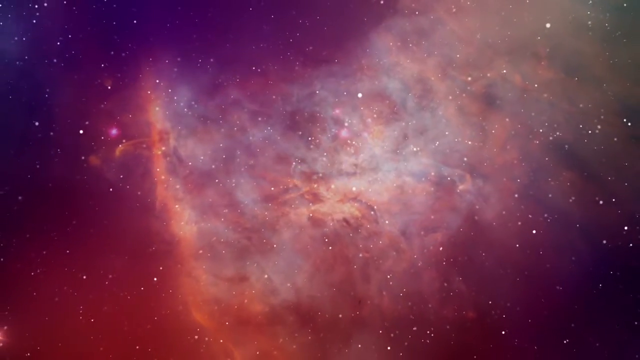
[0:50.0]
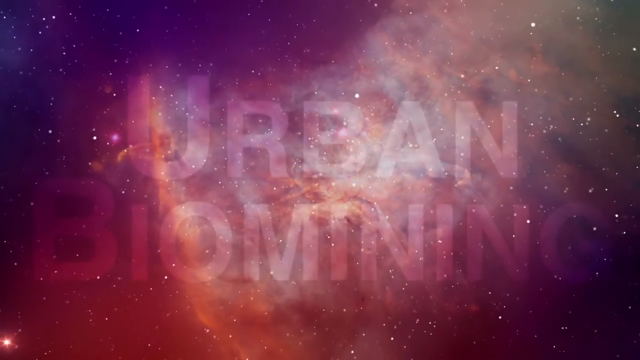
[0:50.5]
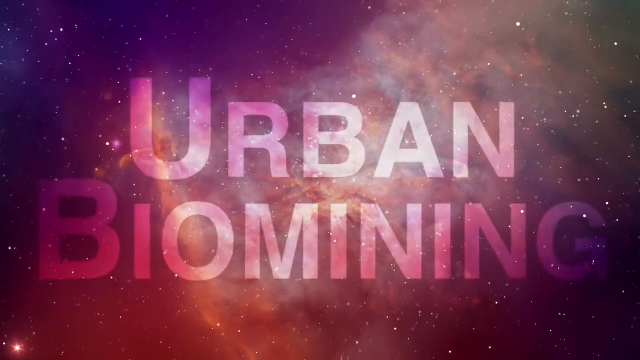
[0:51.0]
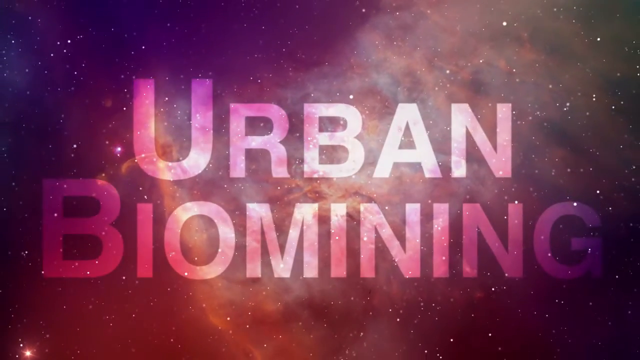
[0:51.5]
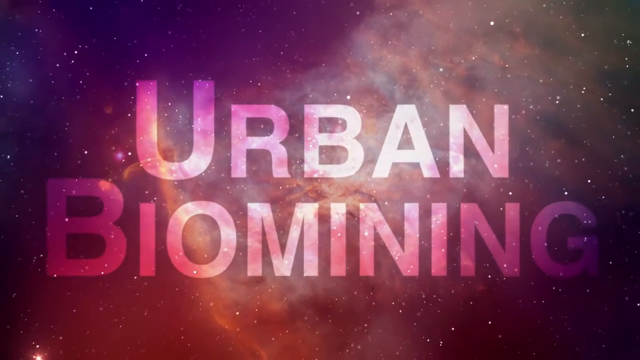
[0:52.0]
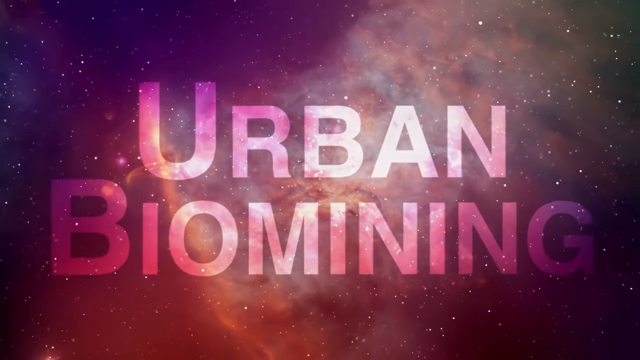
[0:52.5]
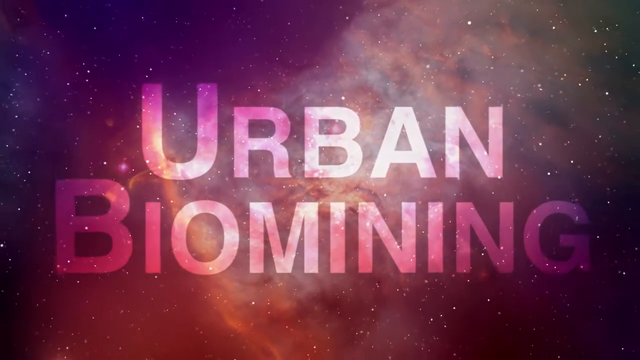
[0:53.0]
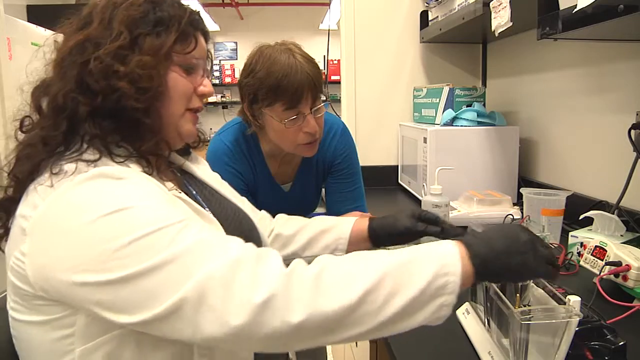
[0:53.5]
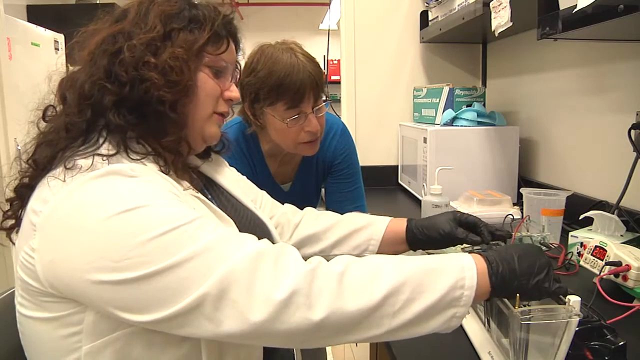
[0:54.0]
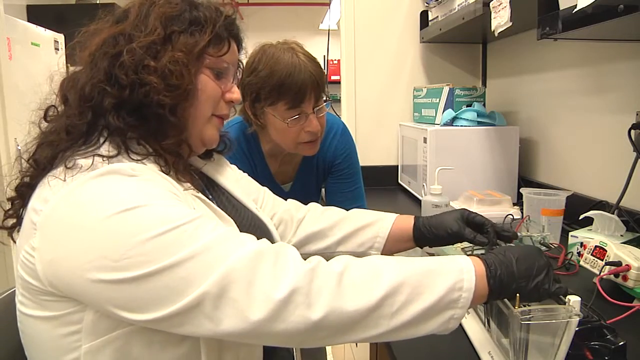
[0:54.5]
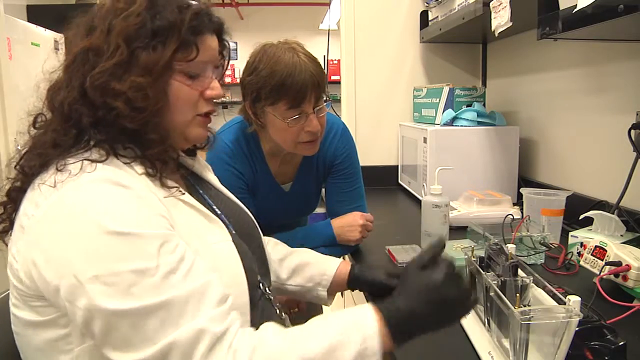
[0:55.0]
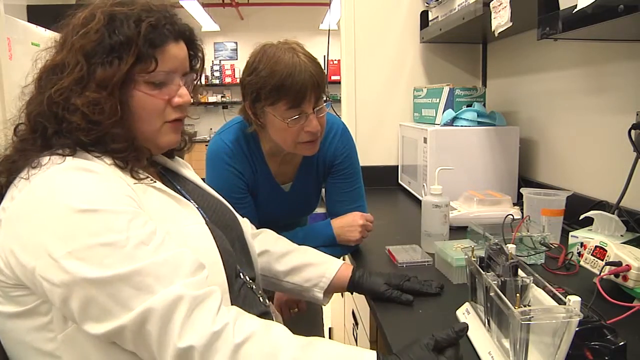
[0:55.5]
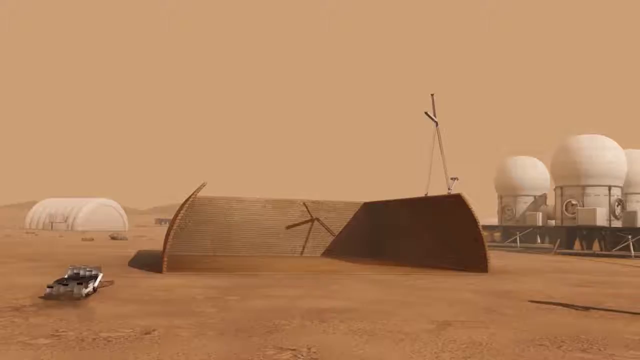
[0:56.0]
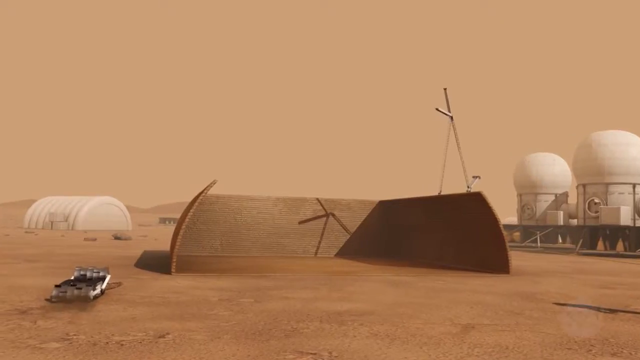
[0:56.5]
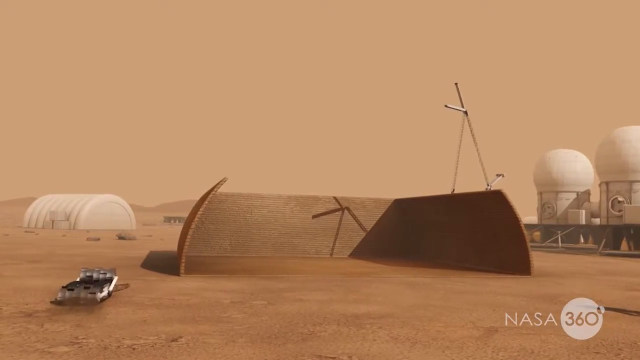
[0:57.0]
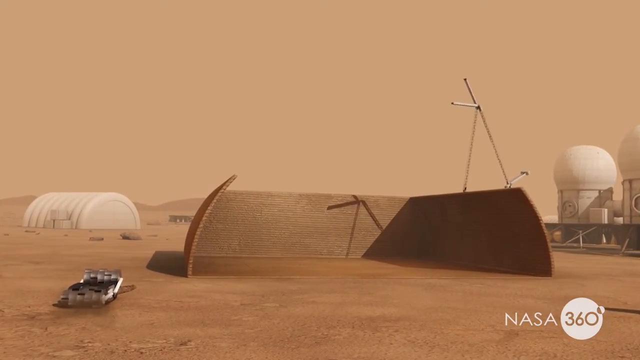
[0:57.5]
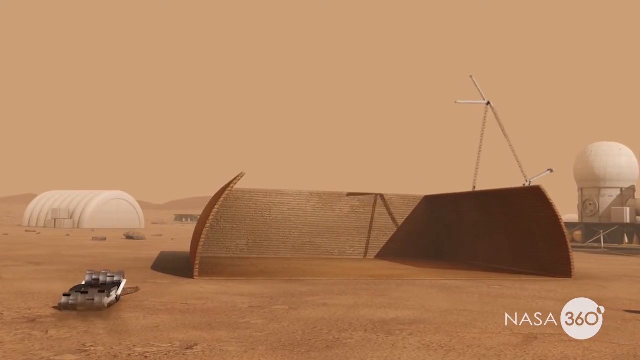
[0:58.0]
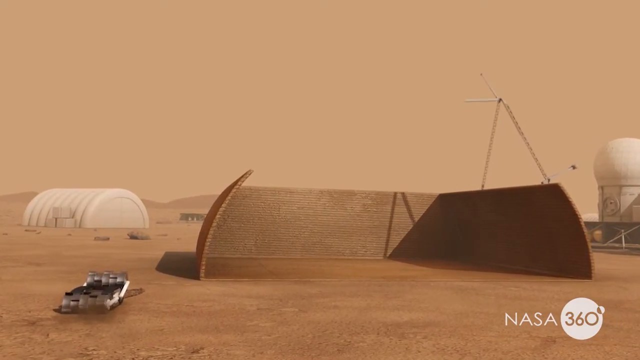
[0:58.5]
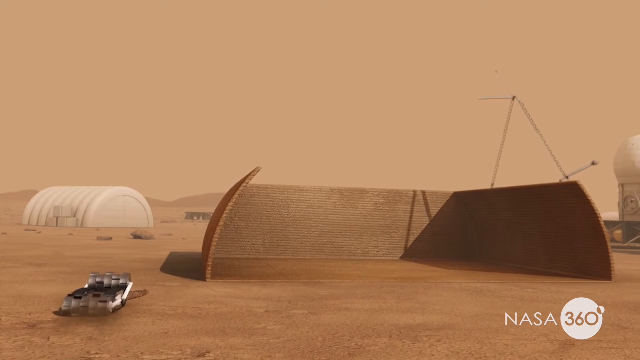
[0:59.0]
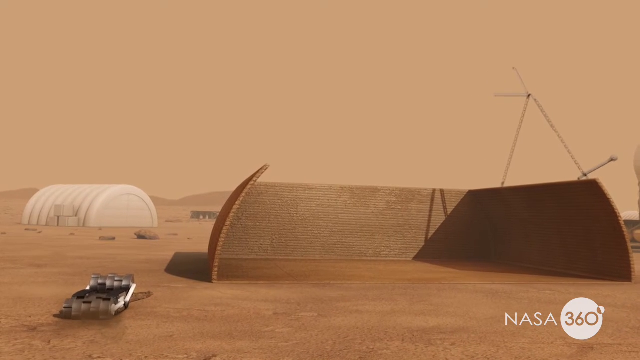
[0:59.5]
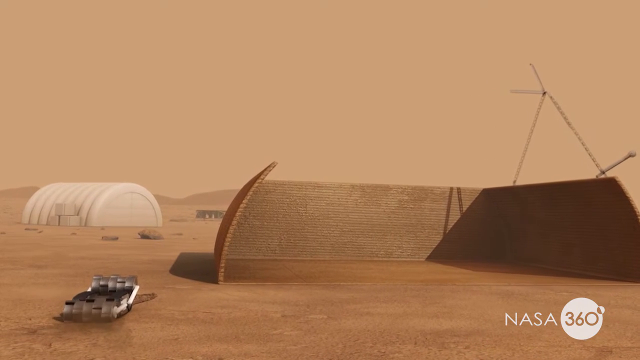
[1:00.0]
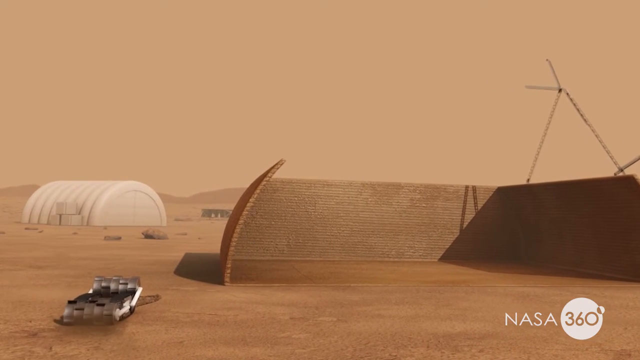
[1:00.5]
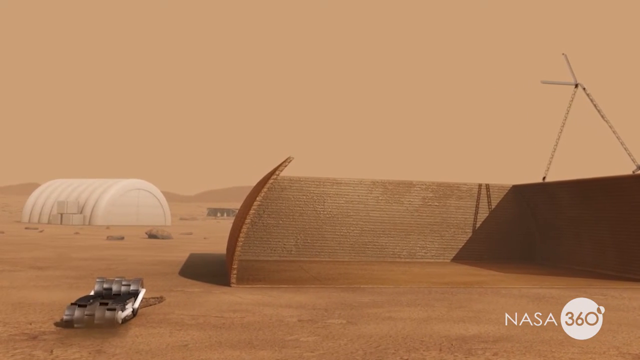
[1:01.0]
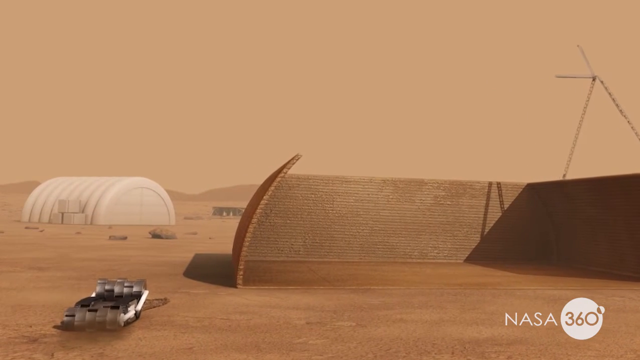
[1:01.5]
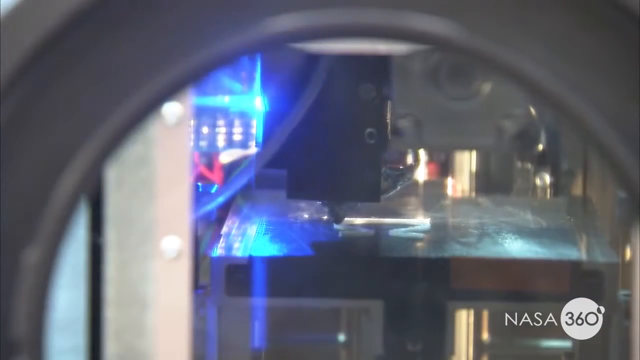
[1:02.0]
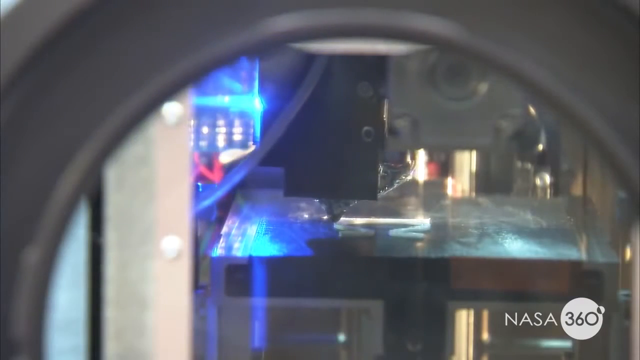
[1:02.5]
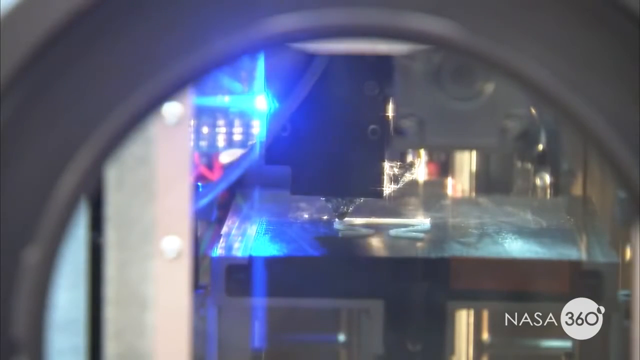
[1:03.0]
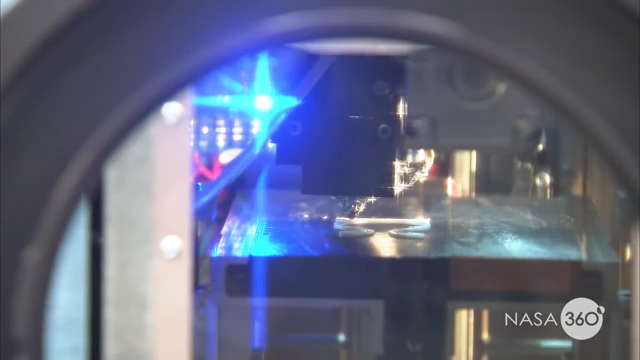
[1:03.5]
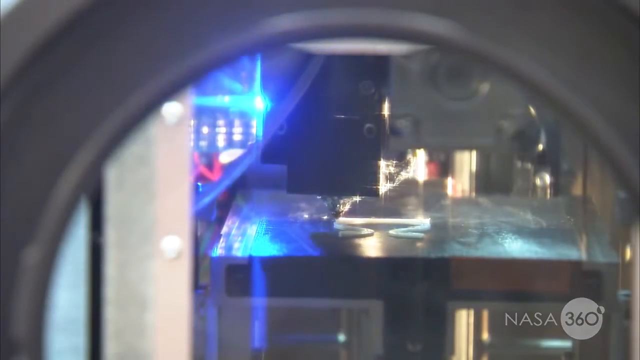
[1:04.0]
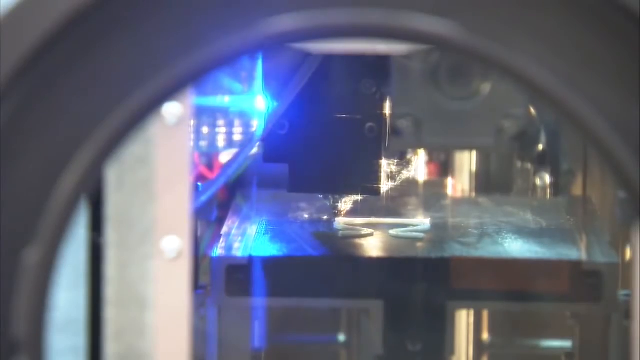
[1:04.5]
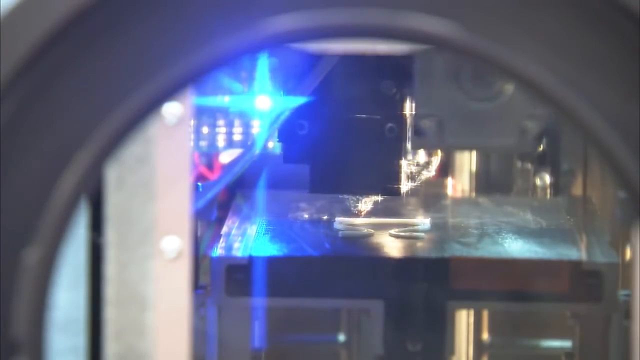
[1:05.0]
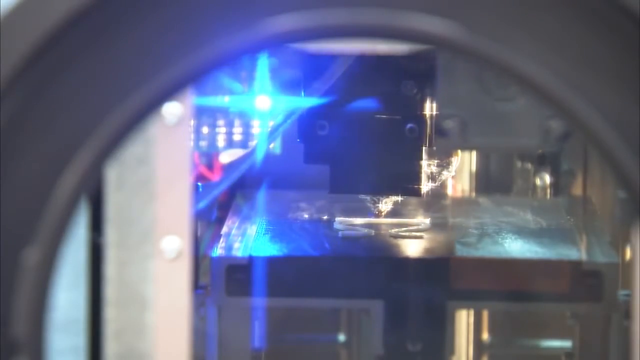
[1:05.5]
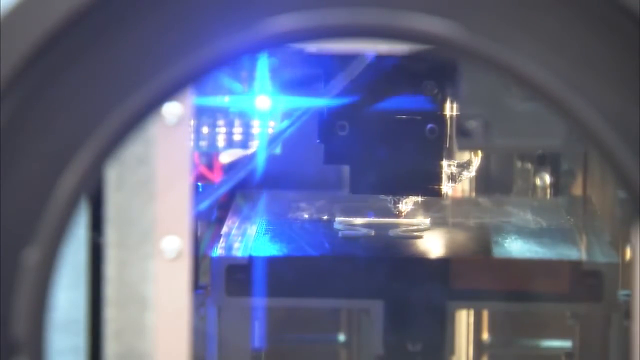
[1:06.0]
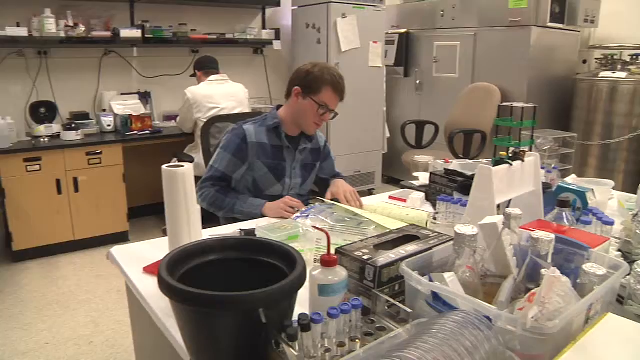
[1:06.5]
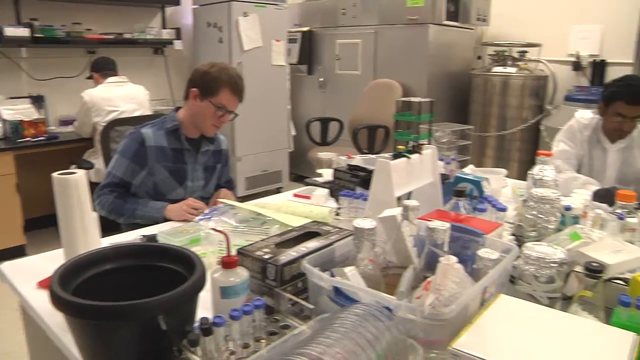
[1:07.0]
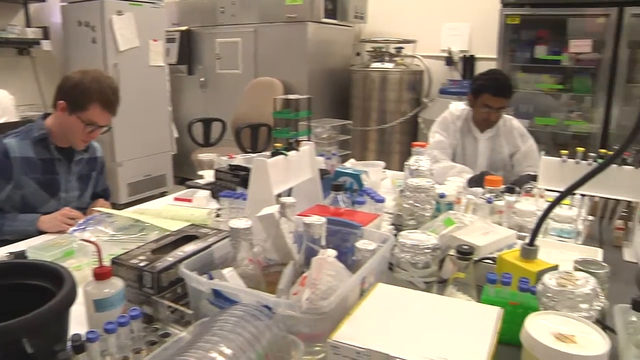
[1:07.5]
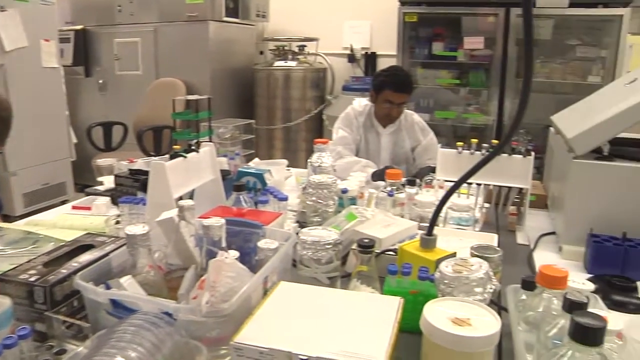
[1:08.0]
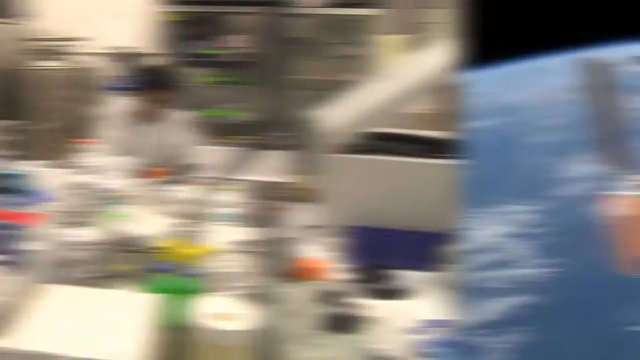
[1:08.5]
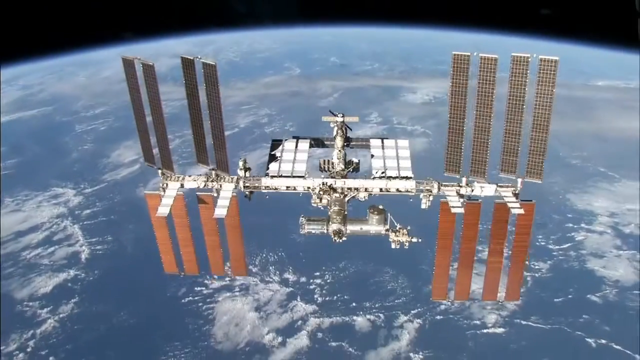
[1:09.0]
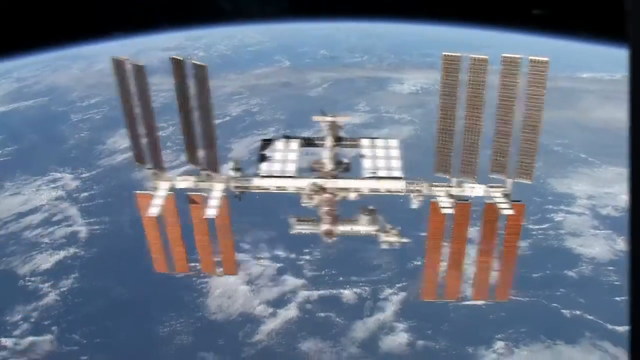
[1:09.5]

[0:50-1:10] A view of space shows multiple stars as small white dots with a cloudy pink and white mist in the center. The camera slowly pans outward, and white text appears that reads "Urban Biomining." The video cuts to two women sitting inside some kind of lab. The one in the foreground wears a white lab coat and black gloves on both hands and touches a device in front of her on a black workbench covered with red and black wires. The other woman, in the background, wears a v-neck long-sleeve sweater and leans forward, looking at the woman handling the device. The woman in the foreground lets go of the device and puts both hands on the table in front of her. The video cuts to a 3D render of a lunar or Martian base with multiple white half-cylinder warehouses in the background, slowly zooming in on what seems to be some kind of machine drilling into the dirt. Next, real footage shows a 3D printer printing a component in white plastic. The video then shows a lab with multiple people around several workbenches covered with various equipment and containers full of items. This is followed by footage of the International Space Station flying above Earth, positioned in the dead center of the screen. It then cuts to a 3D render of a satellite.